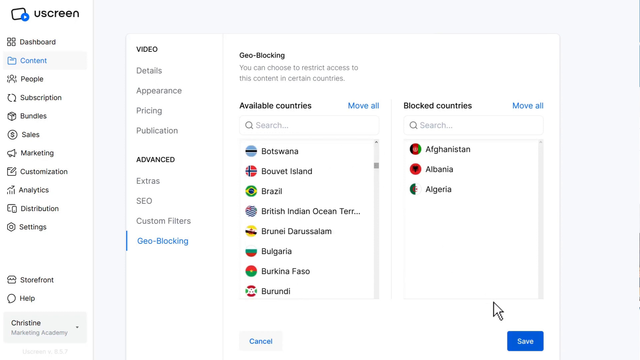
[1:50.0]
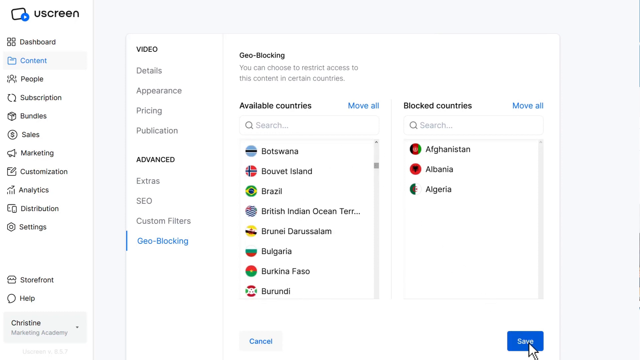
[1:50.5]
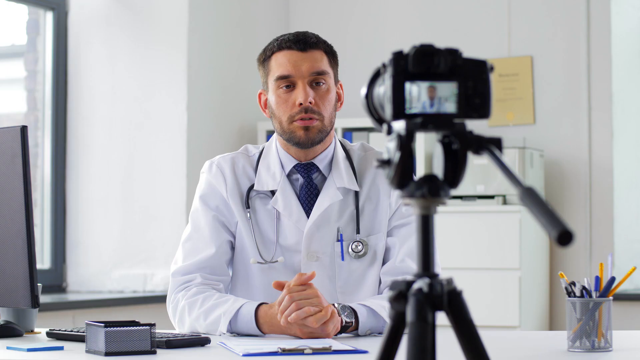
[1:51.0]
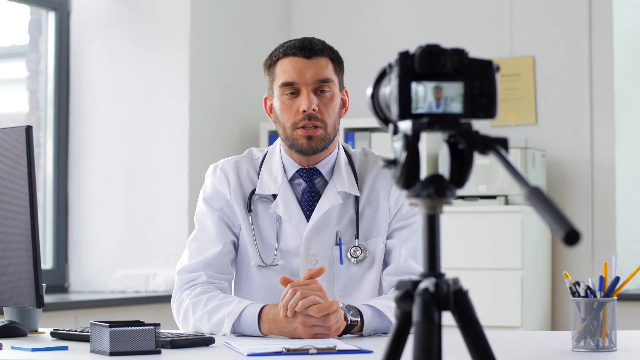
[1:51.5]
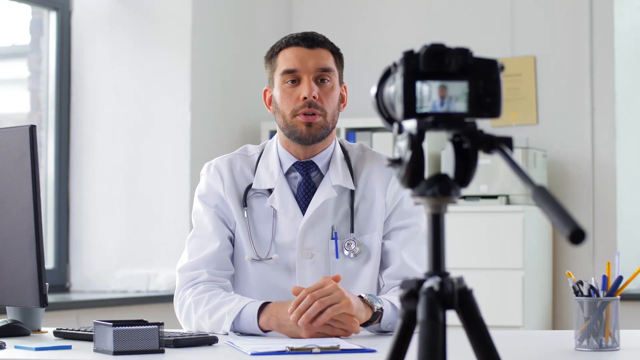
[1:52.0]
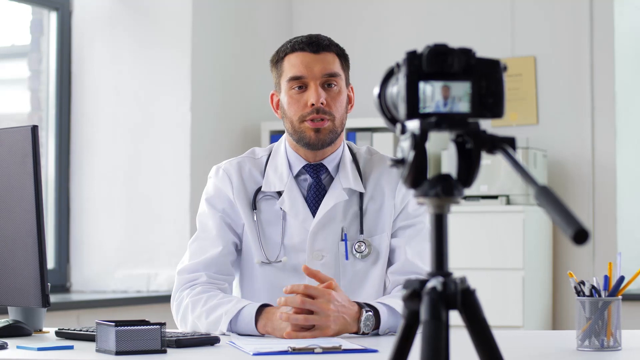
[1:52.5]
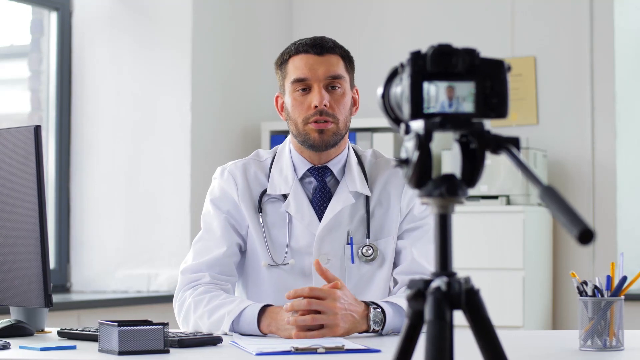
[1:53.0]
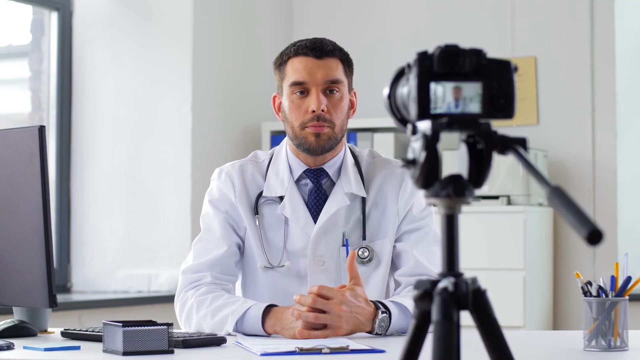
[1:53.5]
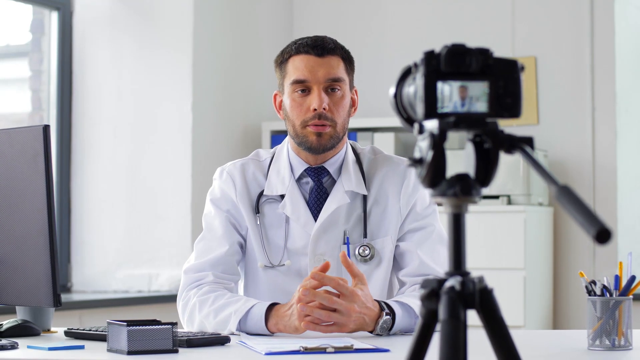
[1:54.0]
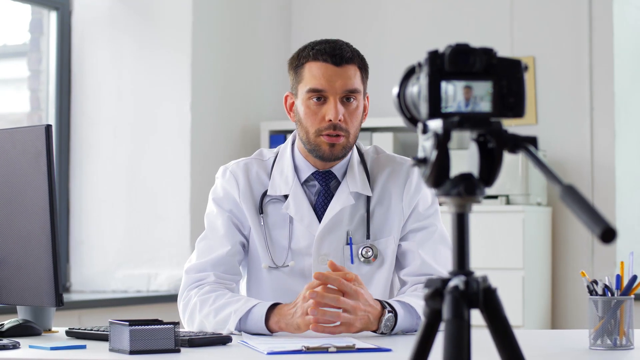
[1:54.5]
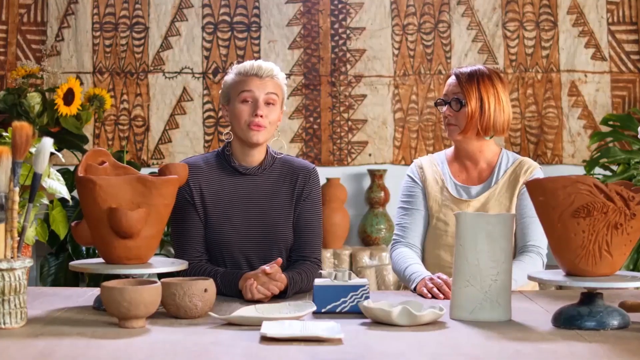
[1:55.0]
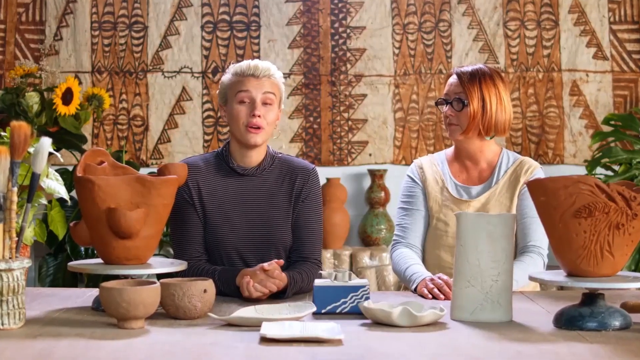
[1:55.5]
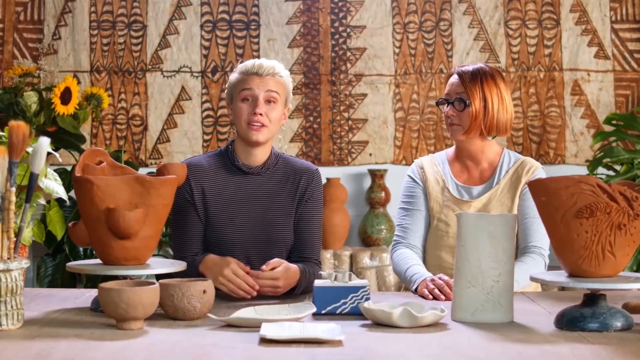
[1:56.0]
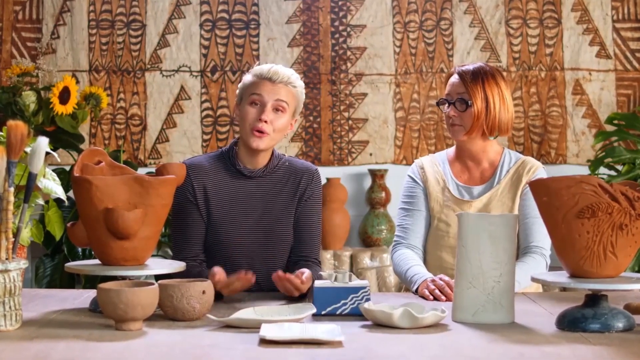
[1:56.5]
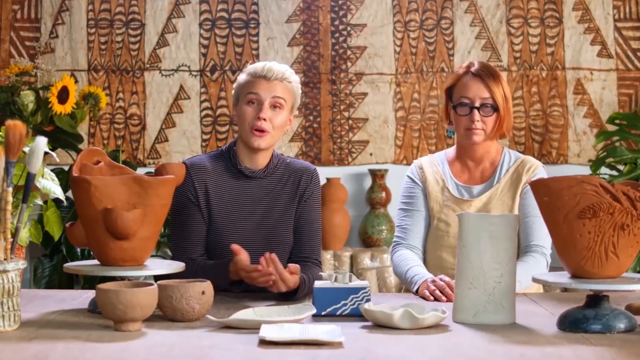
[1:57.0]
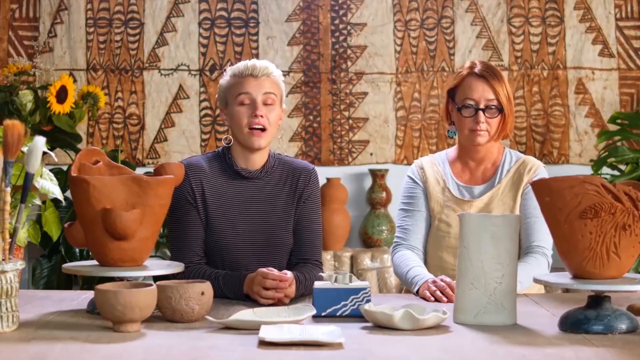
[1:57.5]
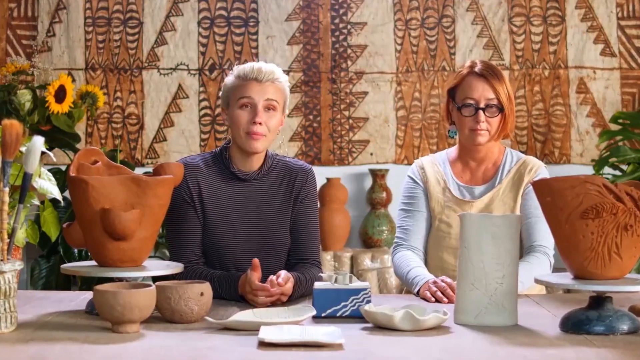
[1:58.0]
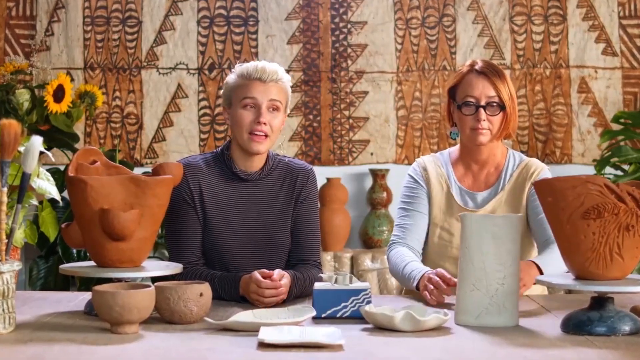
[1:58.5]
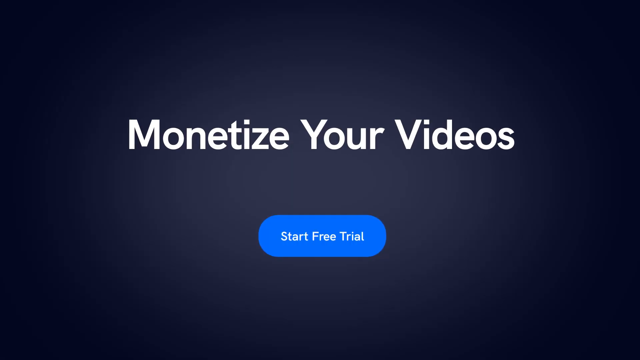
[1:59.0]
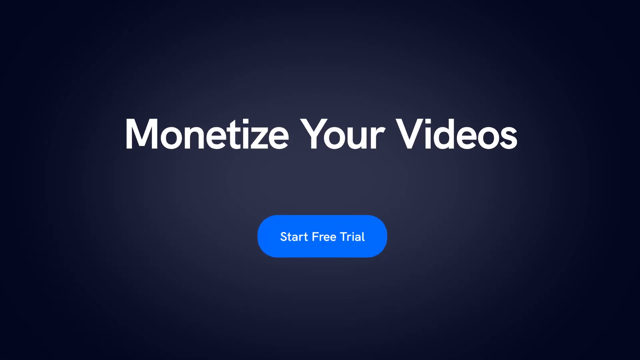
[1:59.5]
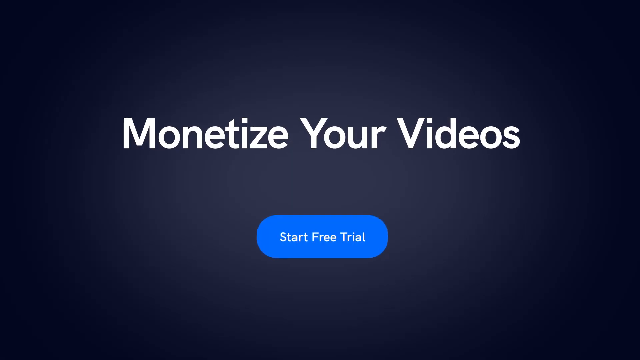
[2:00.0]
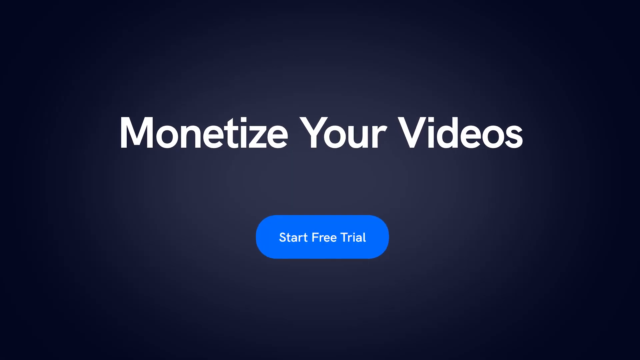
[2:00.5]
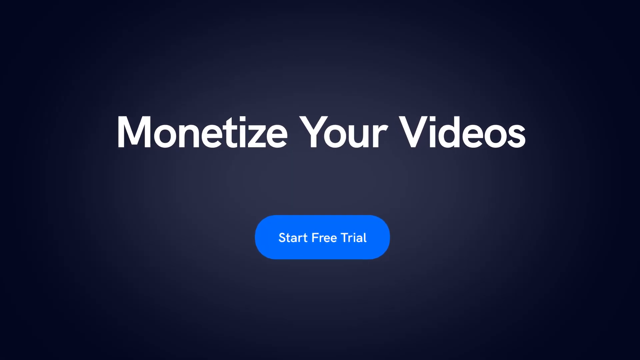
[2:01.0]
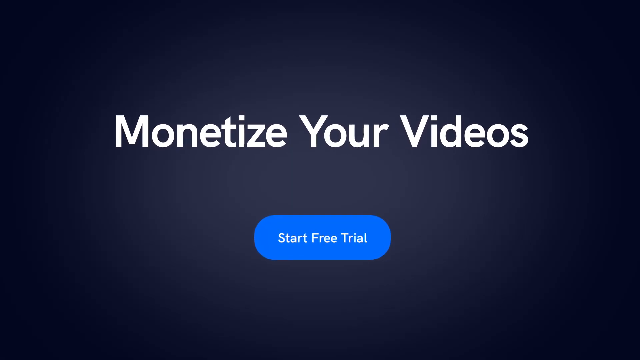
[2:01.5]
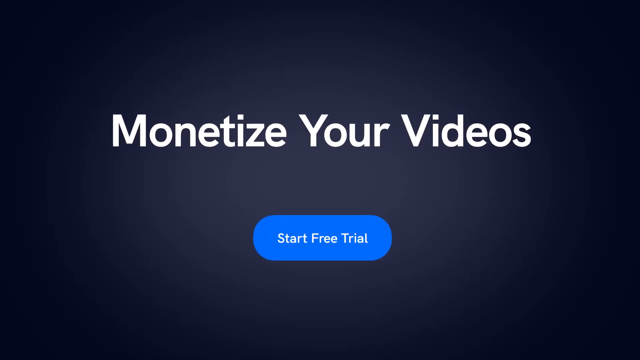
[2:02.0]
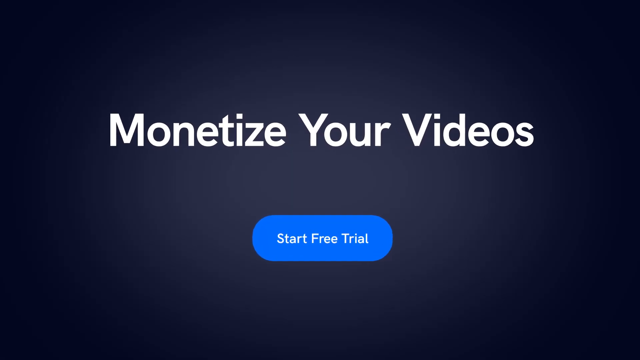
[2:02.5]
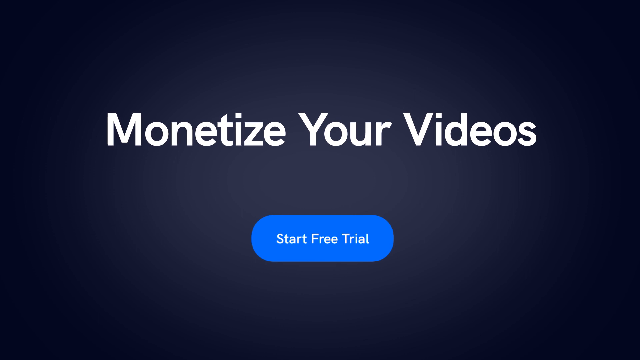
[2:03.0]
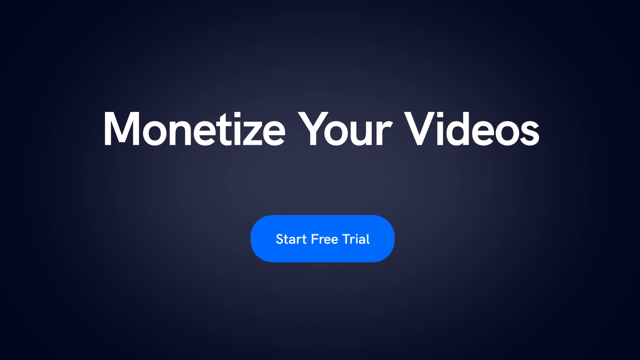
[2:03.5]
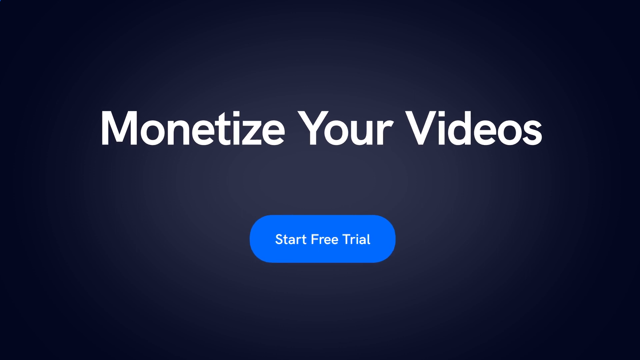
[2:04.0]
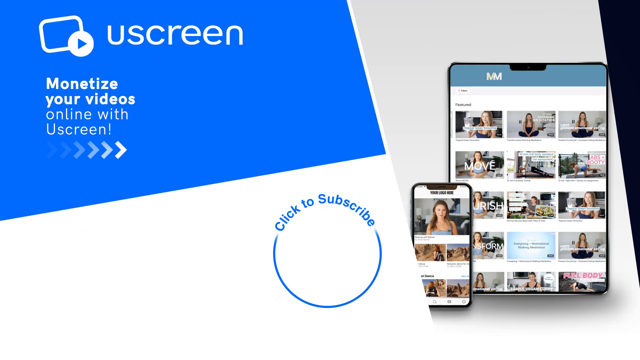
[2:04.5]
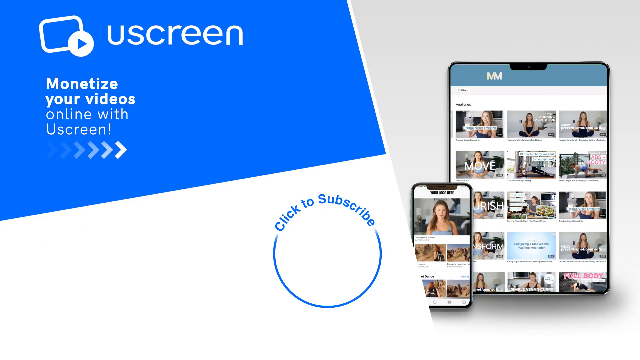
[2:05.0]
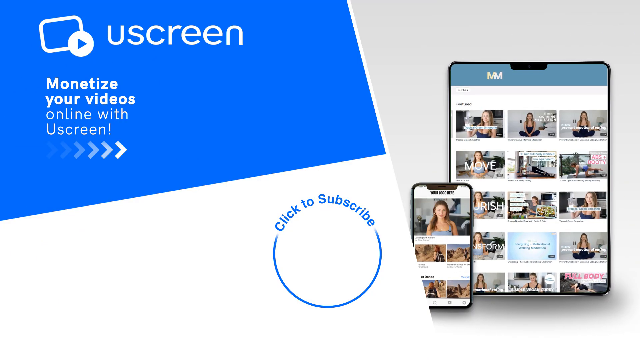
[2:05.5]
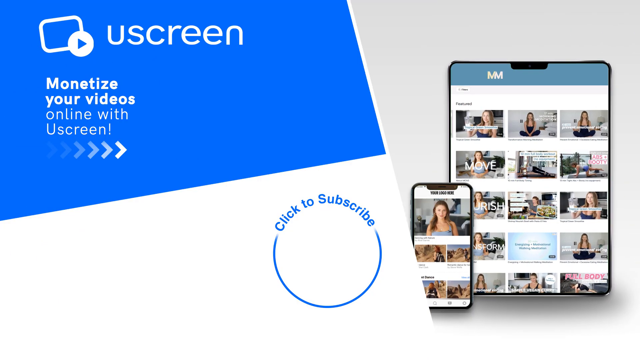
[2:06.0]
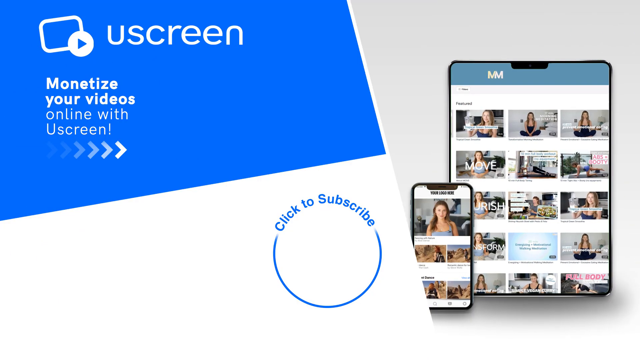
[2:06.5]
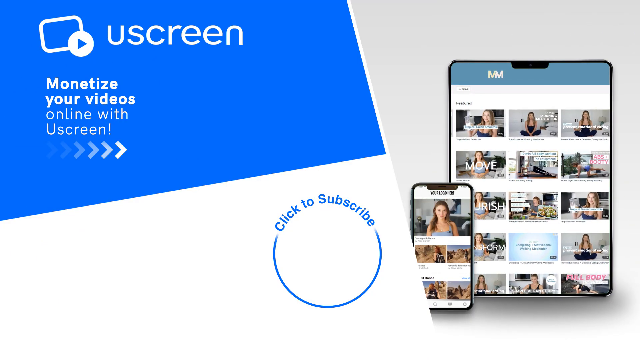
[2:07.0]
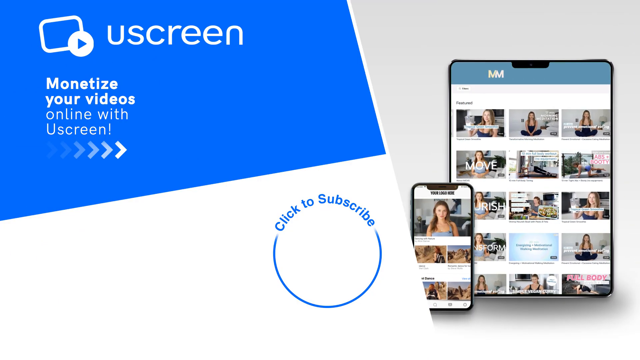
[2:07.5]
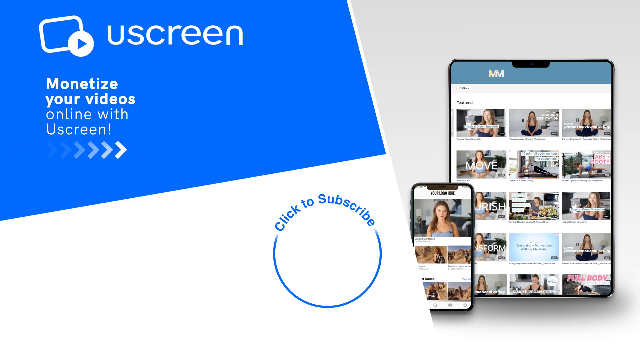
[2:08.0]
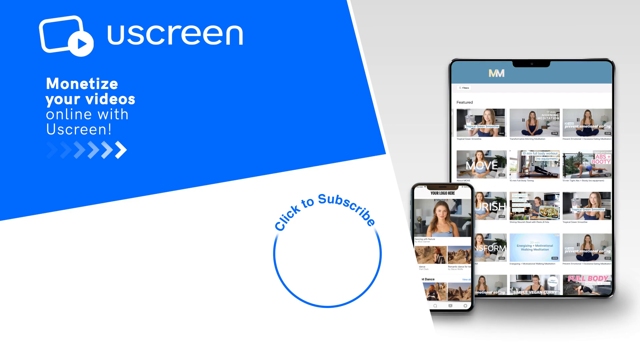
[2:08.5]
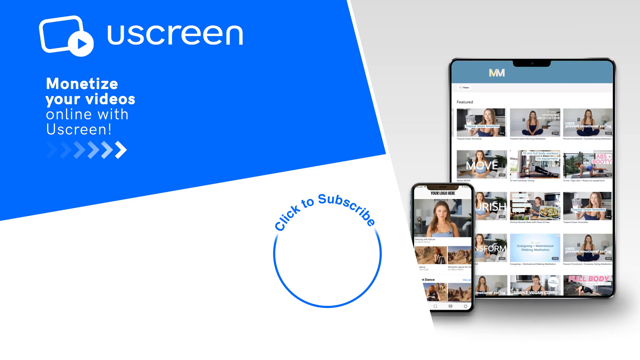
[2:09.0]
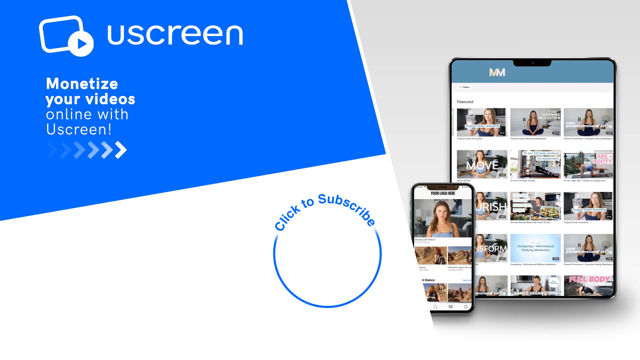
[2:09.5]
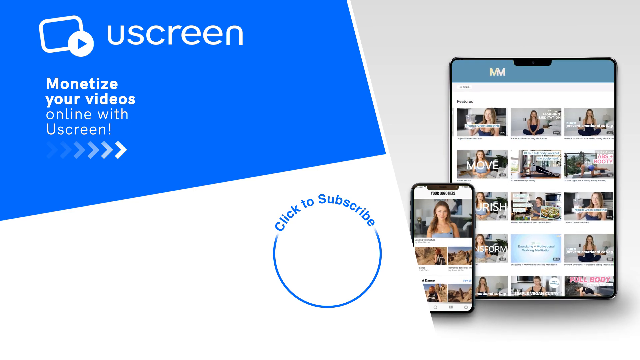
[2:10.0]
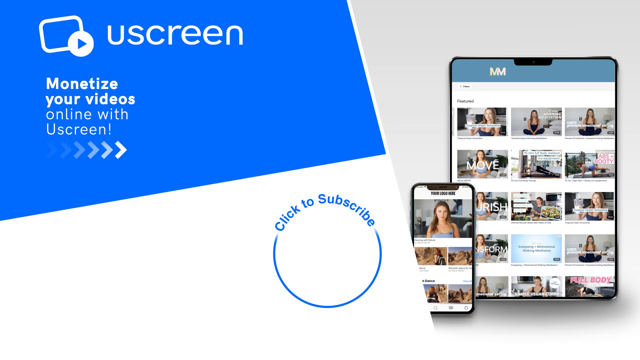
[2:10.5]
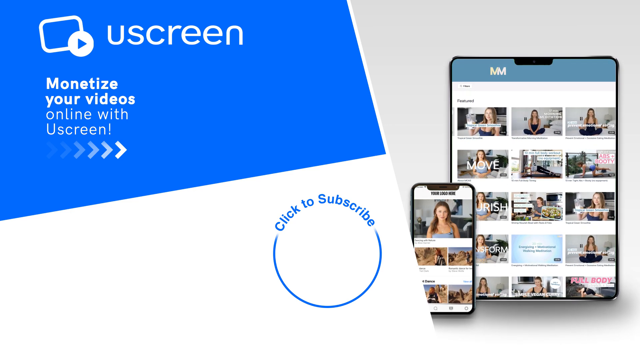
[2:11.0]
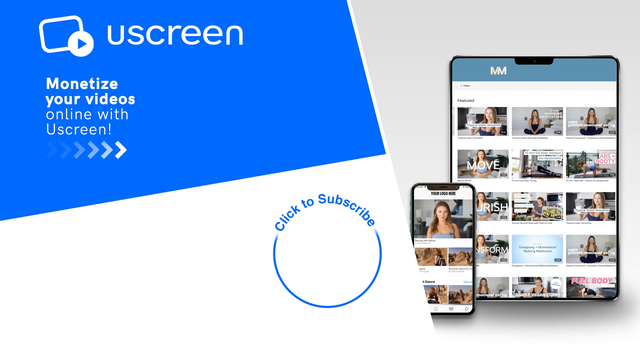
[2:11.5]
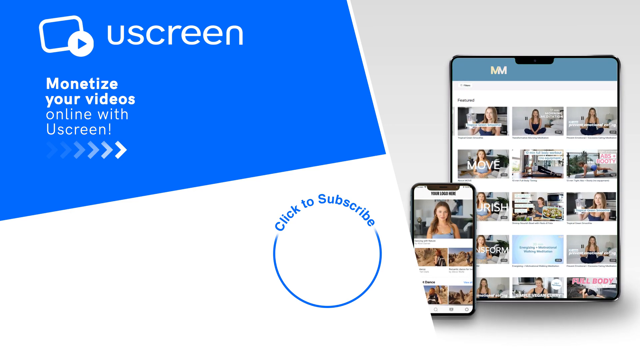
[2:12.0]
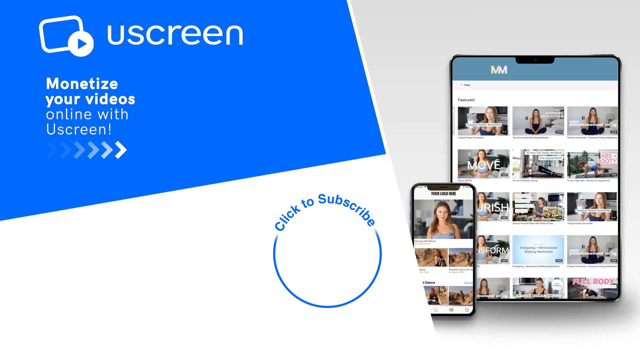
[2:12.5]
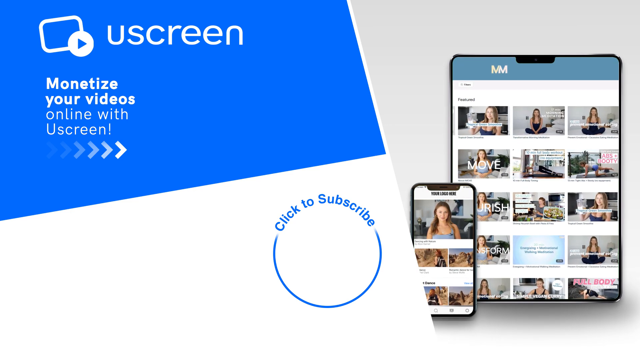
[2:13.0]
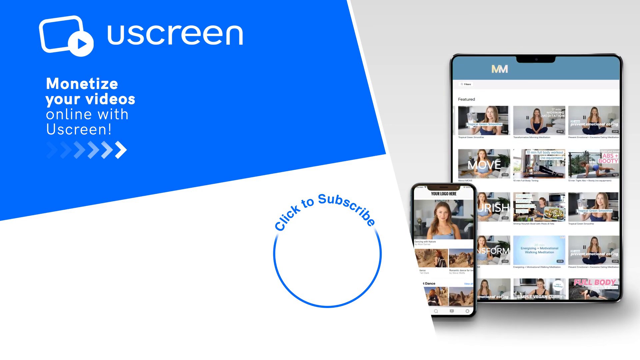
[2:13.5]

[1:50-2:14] The website under the Mimi method shows a doctor speaking at his office; he is looking into a camera and videotaping himself. Then two women are shown speaking in their home with pottery in front of them. Text reads "monetize your videos, start free trial," with a blue button that gets bigger and bigger as the view zooms in. There is an "unscreen" button, and "click to subscribe" is shown with a circle underneath the letters. An iPad and a phone are then shown, with "MM" in the blue border at the top. Many videos are shown, all of the woman of the Mimi method doing exercise.